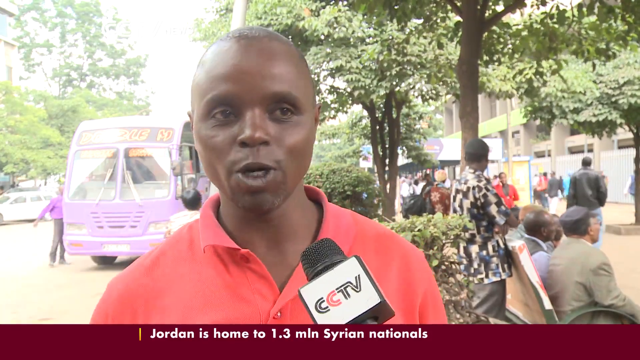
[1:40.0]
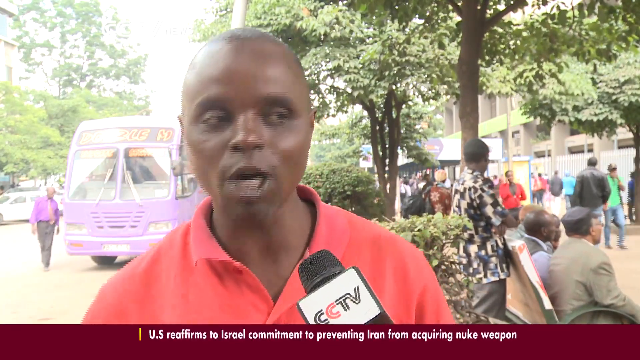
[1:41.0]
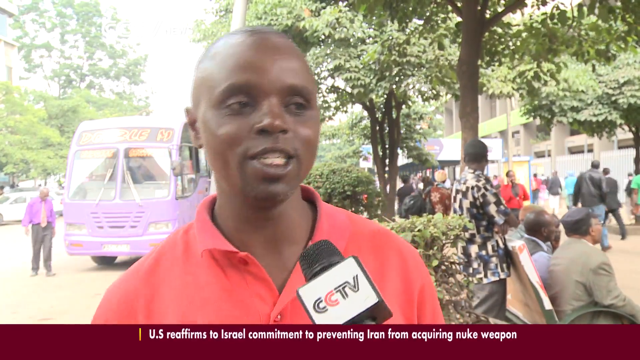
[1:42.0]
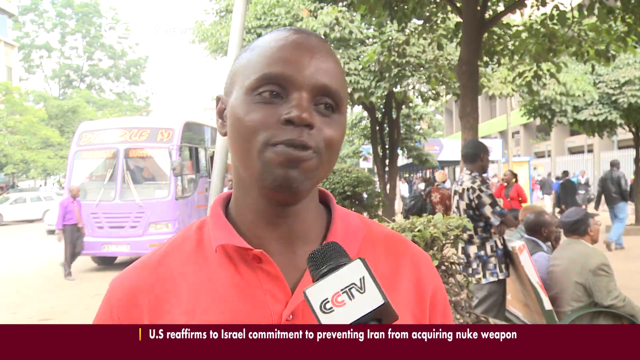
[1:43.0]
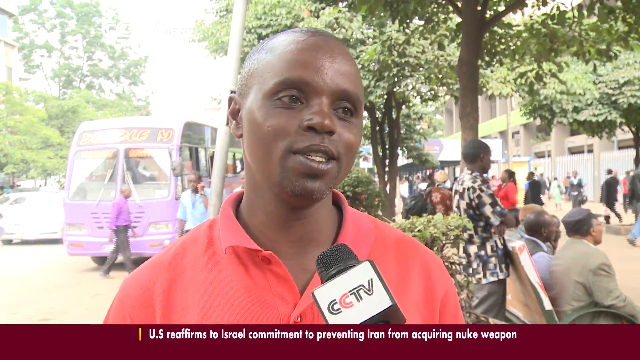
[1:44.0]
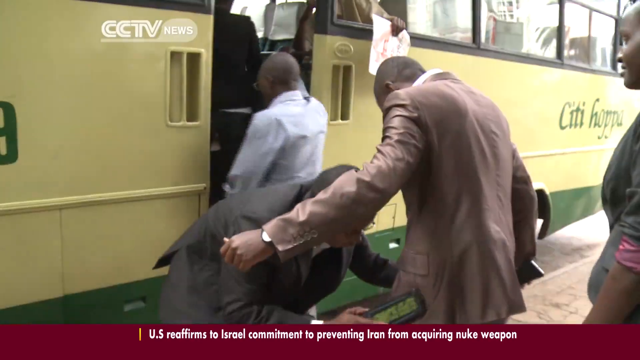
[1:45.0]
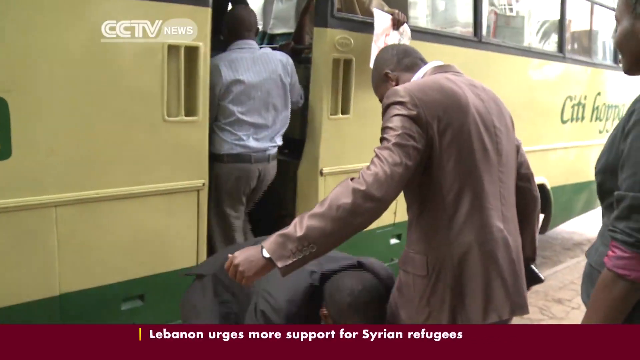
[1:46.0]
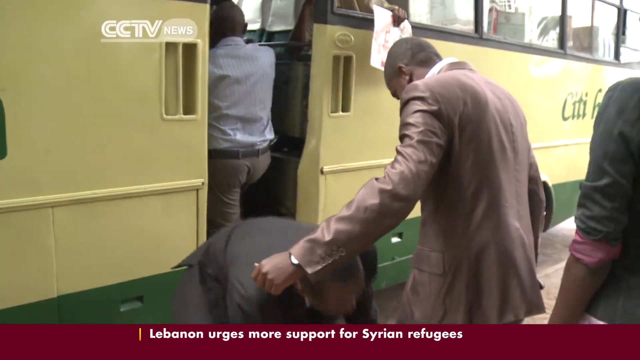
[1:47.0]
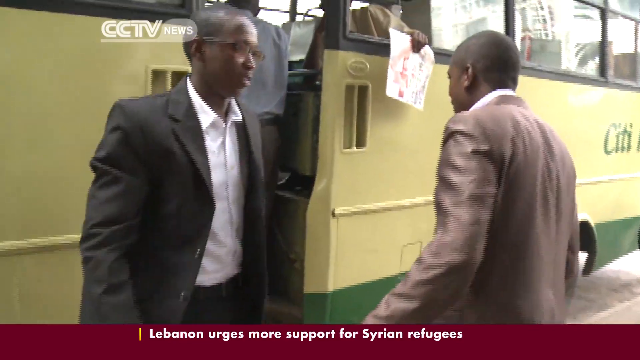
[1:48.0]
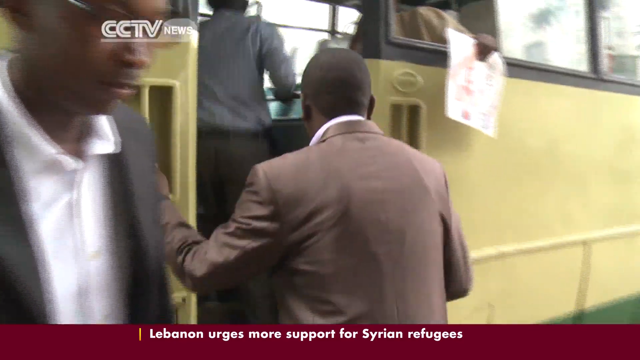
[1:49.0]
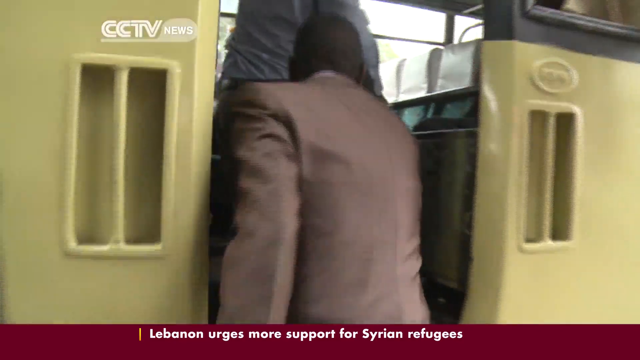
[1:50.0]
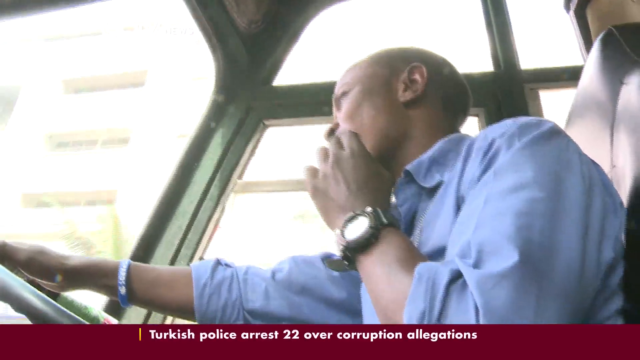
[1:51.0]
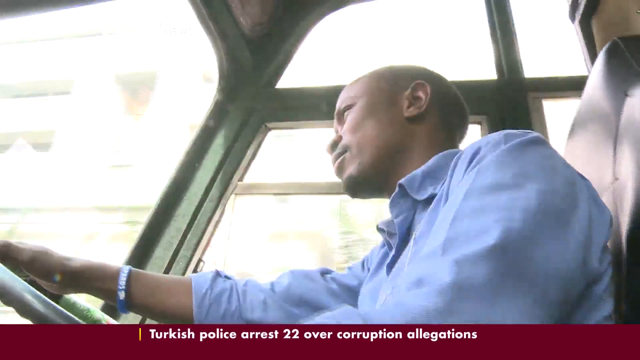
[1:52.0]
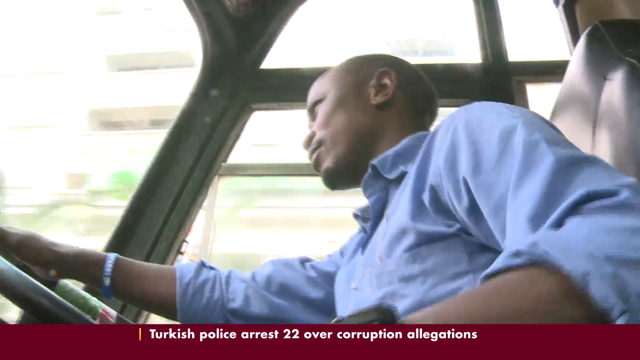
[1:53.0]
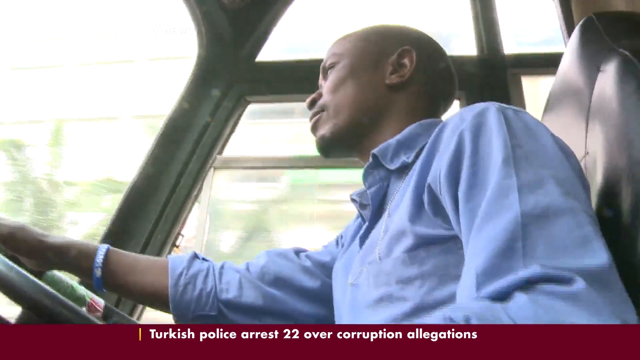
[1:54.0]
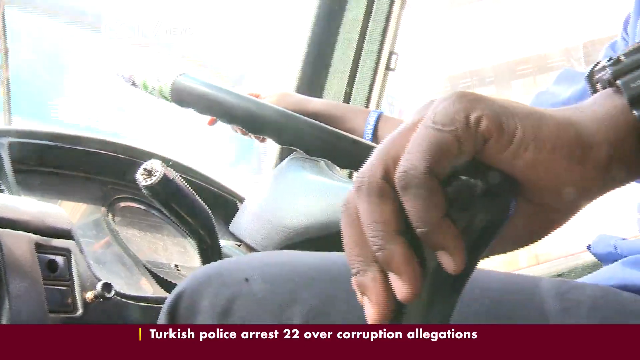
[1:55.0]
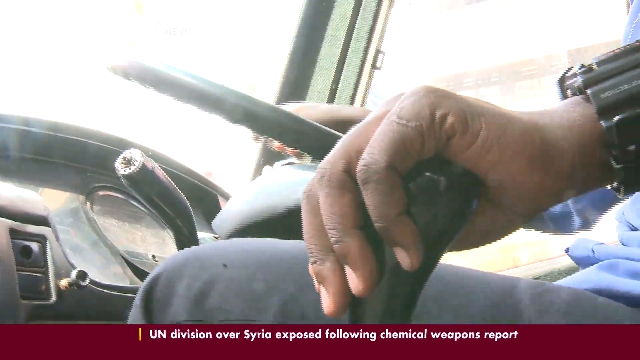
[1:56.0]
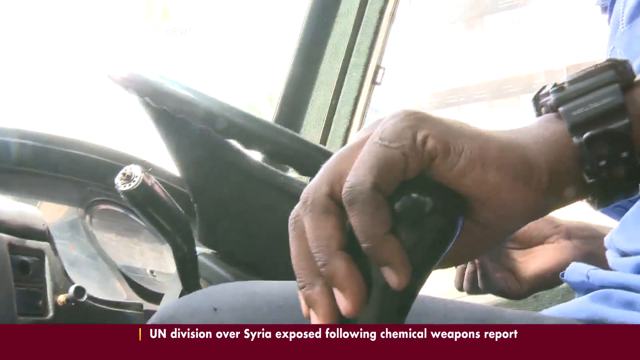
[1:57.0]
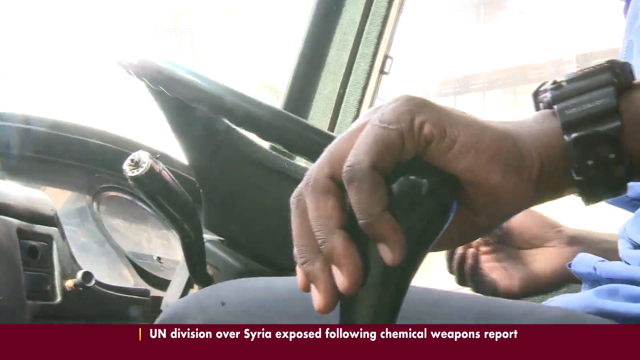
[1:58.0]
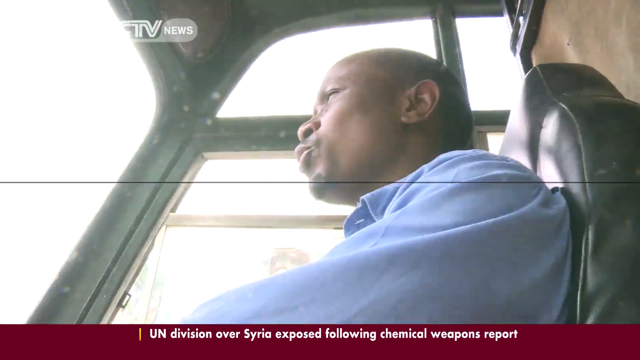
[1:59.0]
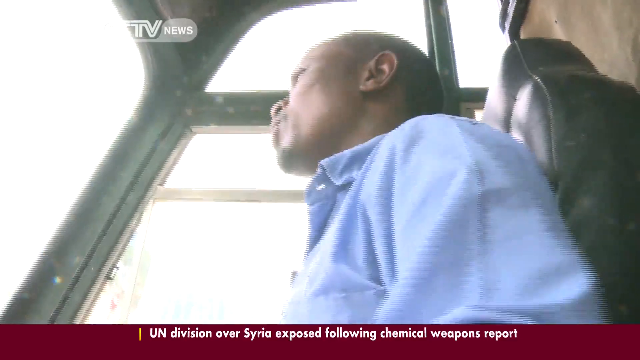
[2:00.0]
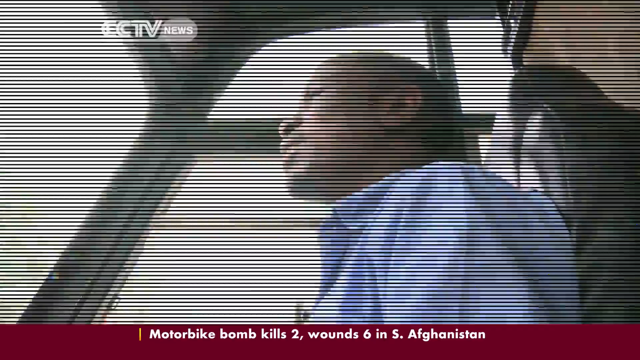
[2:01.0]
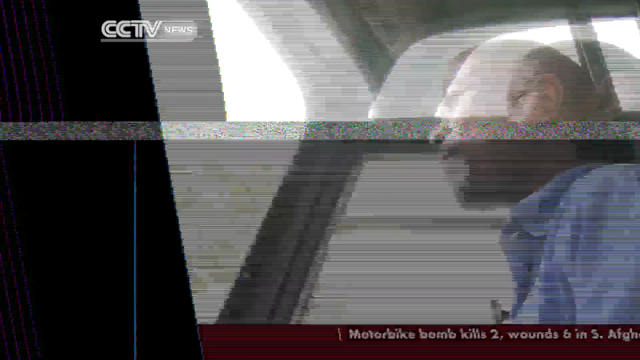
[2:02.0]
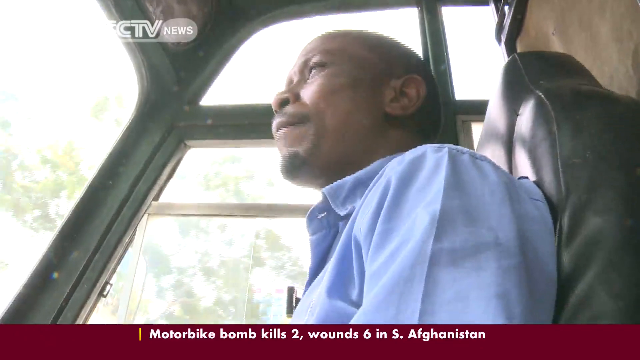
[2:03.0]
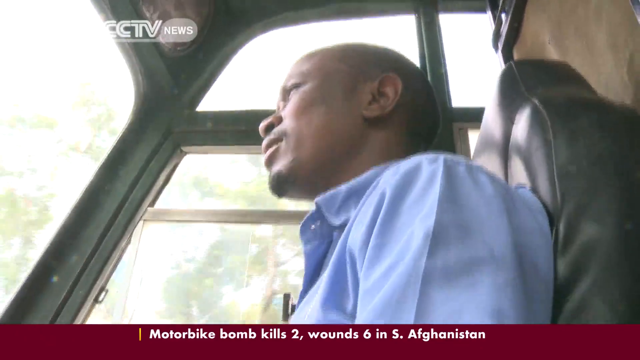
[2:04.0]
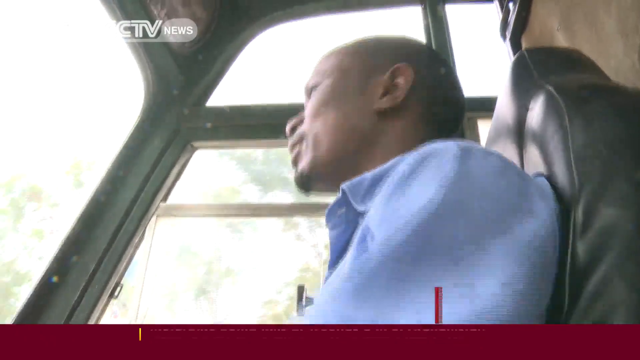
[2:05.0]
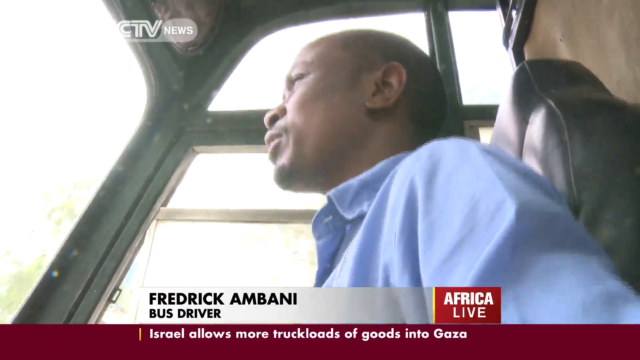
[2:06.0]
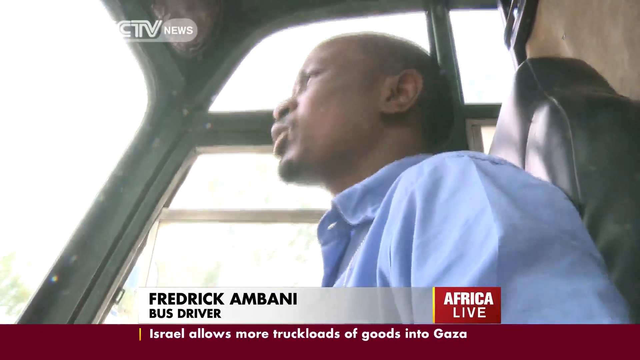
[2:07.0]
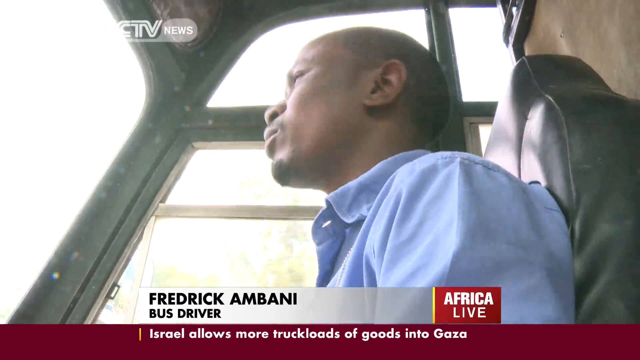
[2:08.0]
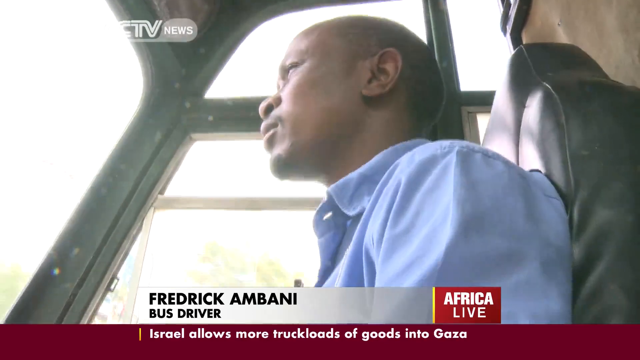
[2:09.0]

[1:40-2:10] The man in the red shirt is interviewed; he has short dark hair and brown eyes and is African-American. The scene changes to people being checked with mobile metal detectors. A bus driver in a blue shirt, Frederick M. Bonney, drives a bus, with close-ups of him at the steering wheel and working the gear shift as he drives and watches the road. The footage is a little hard to see.